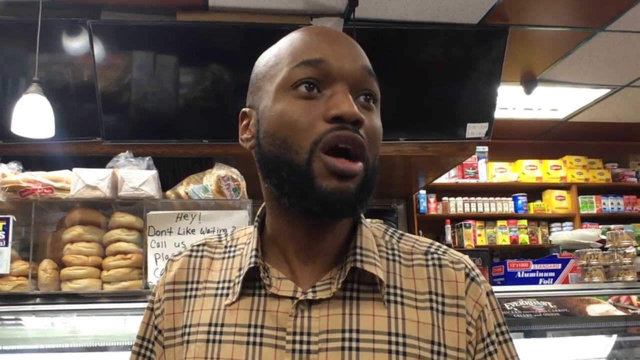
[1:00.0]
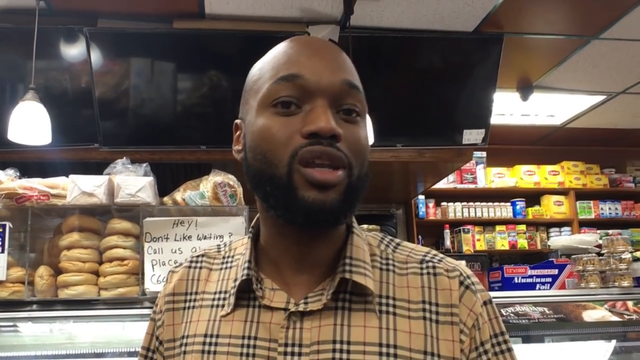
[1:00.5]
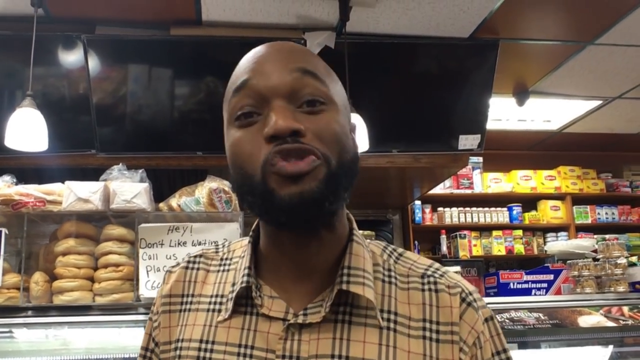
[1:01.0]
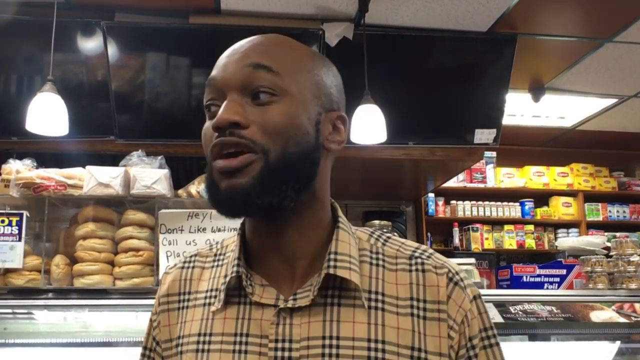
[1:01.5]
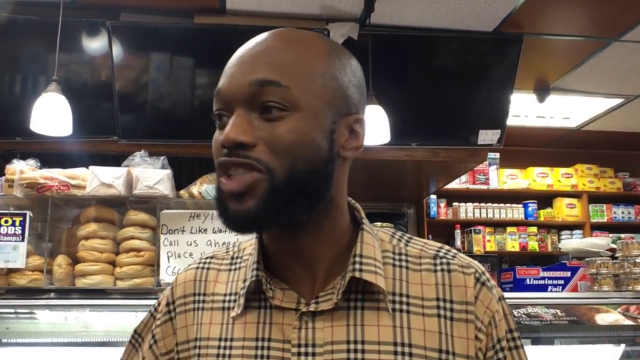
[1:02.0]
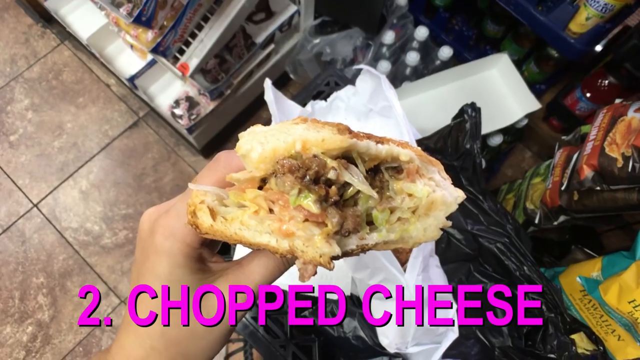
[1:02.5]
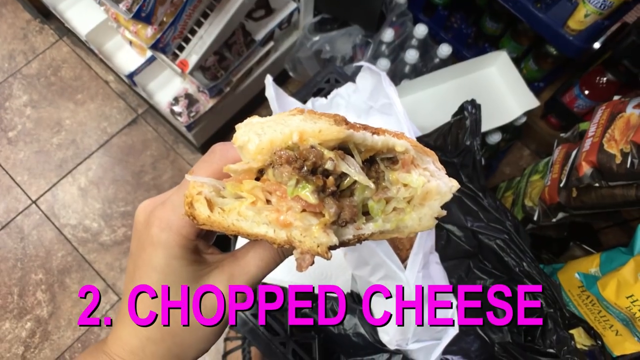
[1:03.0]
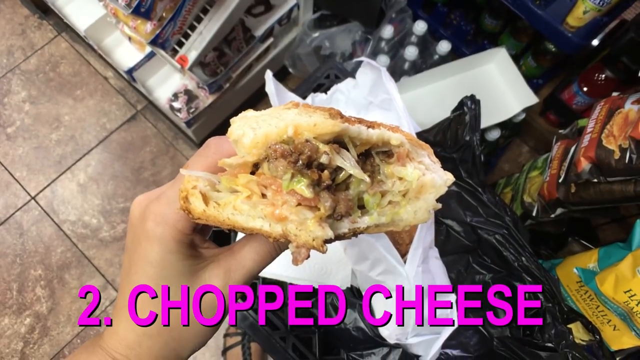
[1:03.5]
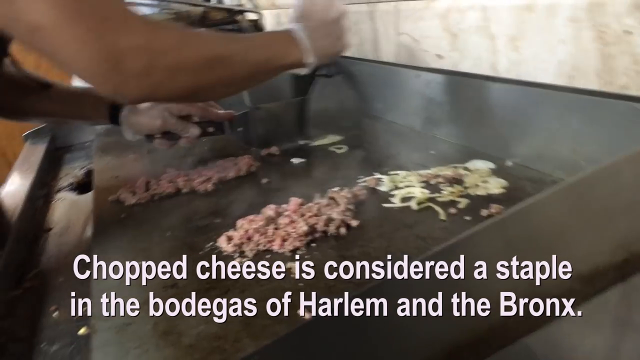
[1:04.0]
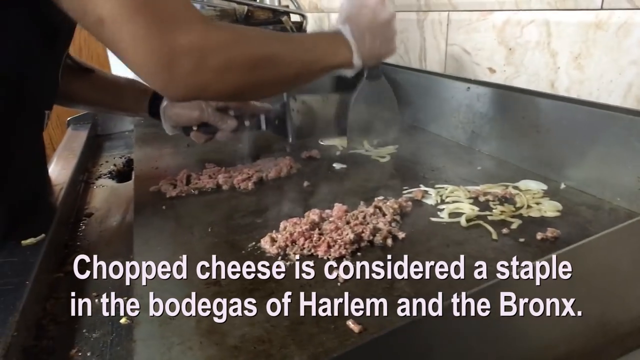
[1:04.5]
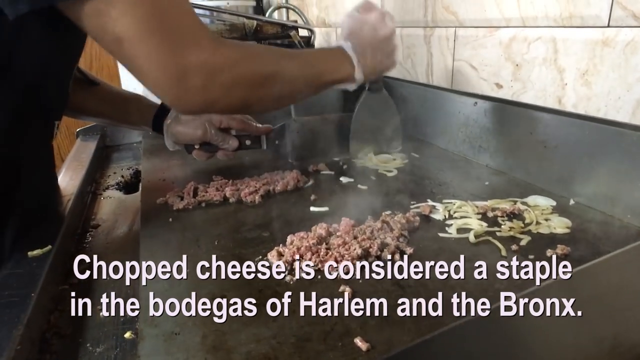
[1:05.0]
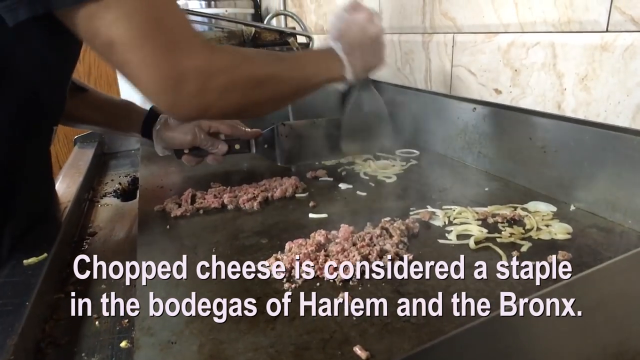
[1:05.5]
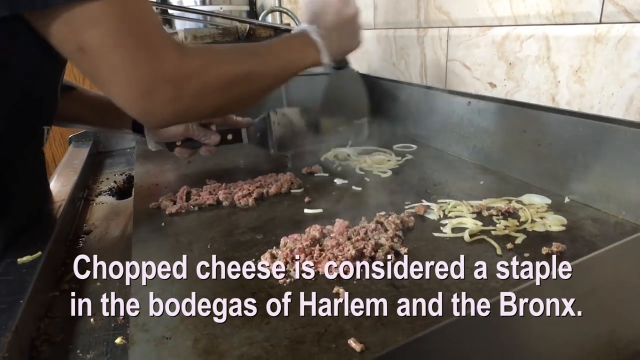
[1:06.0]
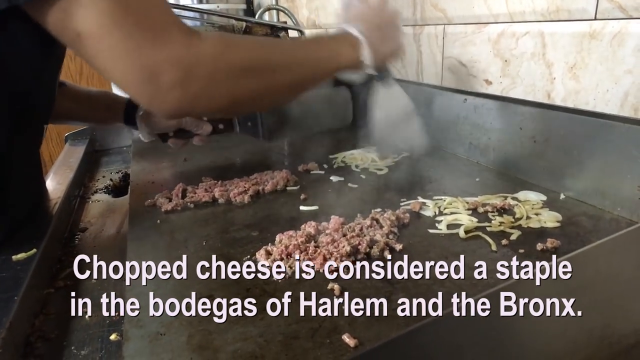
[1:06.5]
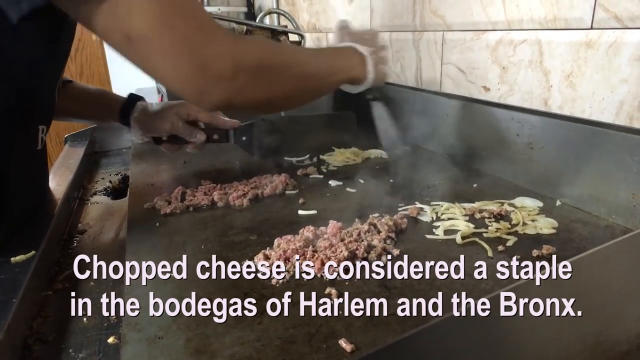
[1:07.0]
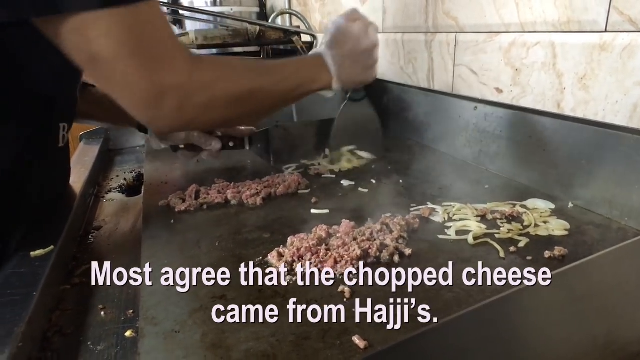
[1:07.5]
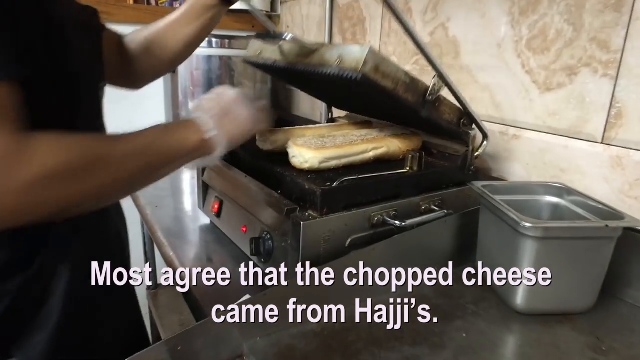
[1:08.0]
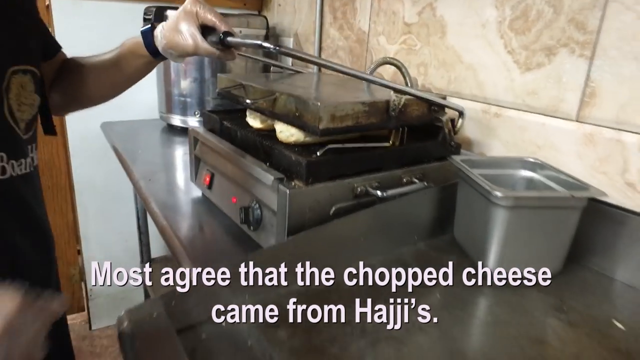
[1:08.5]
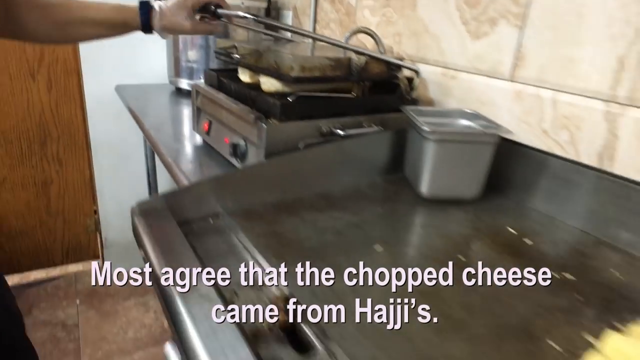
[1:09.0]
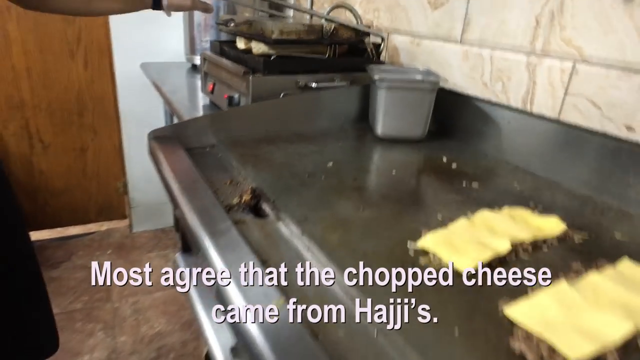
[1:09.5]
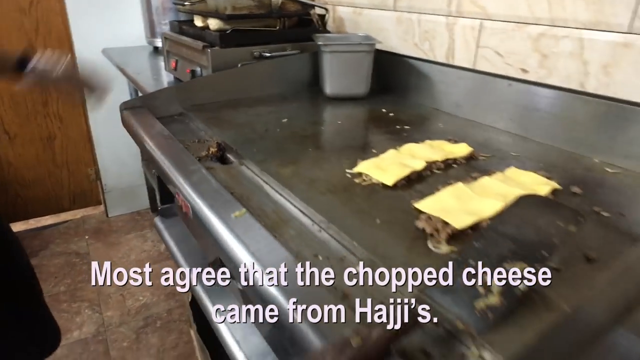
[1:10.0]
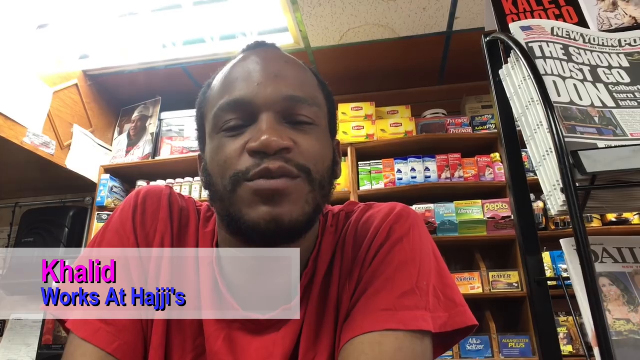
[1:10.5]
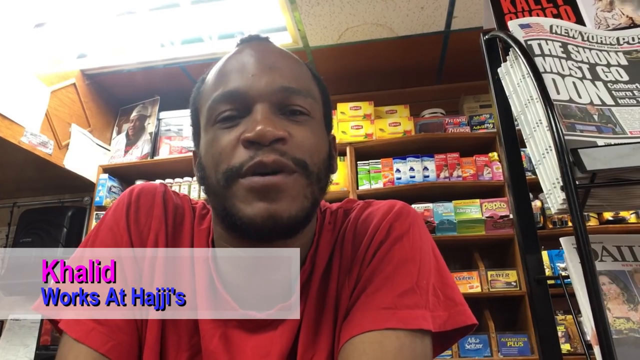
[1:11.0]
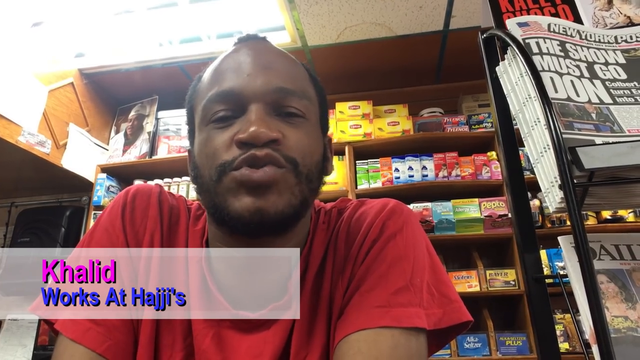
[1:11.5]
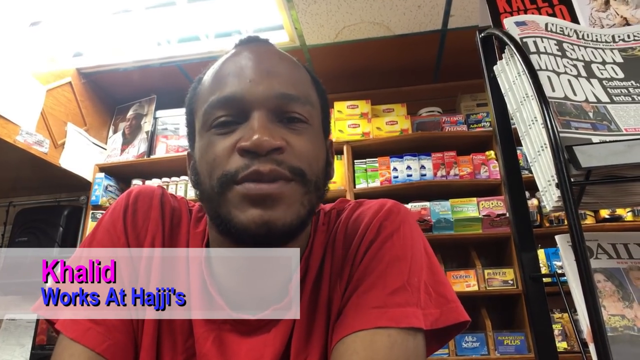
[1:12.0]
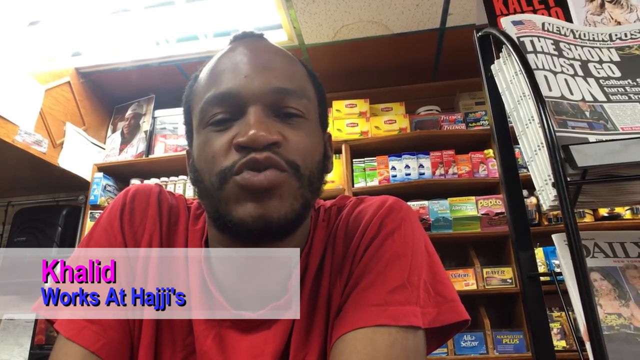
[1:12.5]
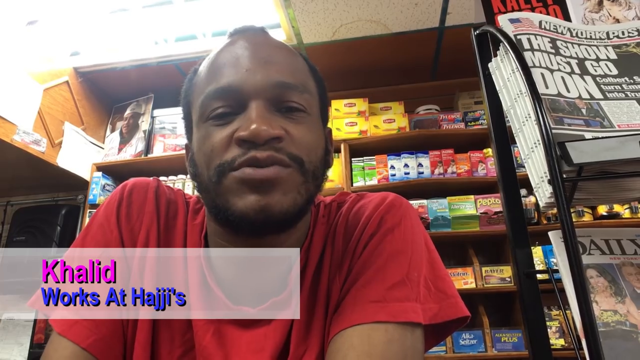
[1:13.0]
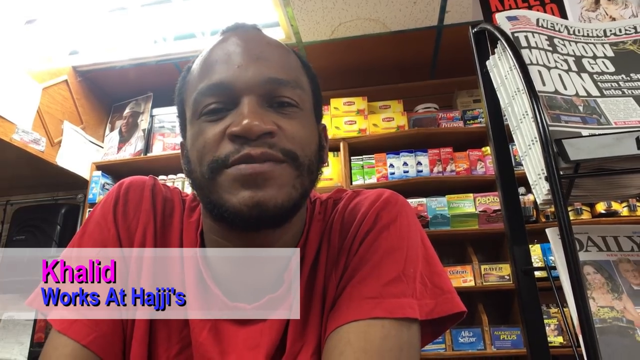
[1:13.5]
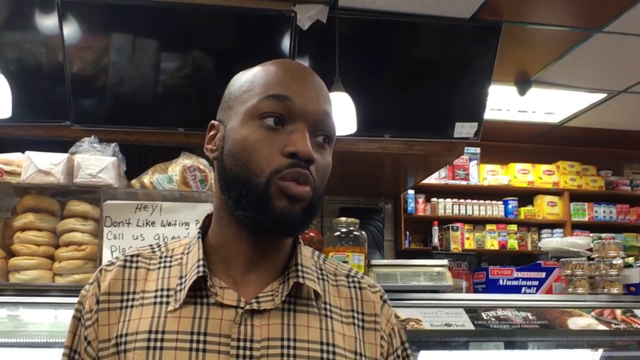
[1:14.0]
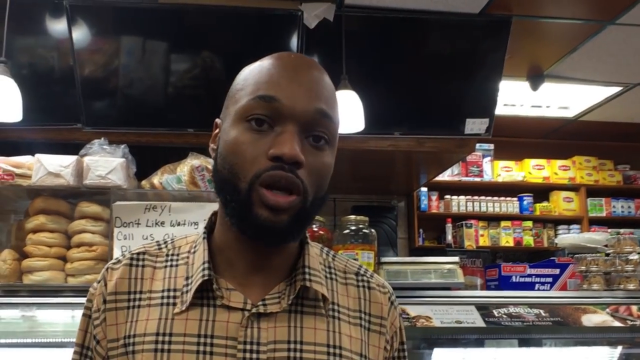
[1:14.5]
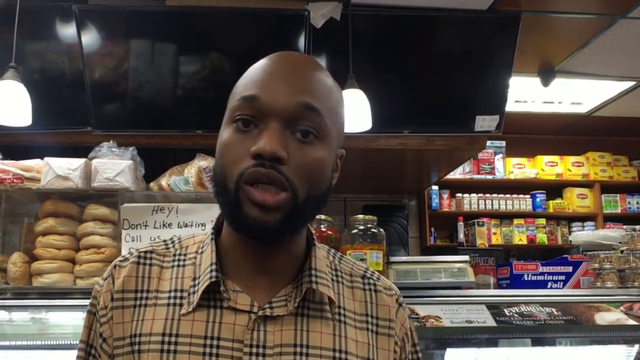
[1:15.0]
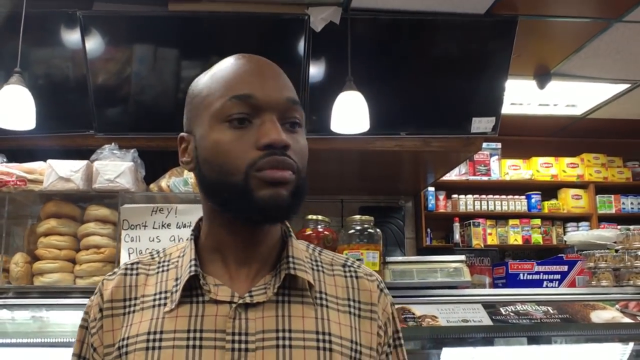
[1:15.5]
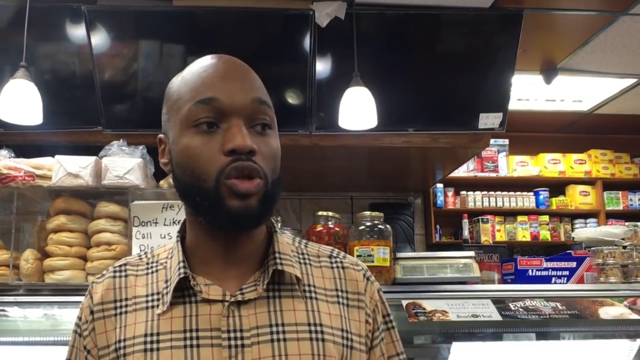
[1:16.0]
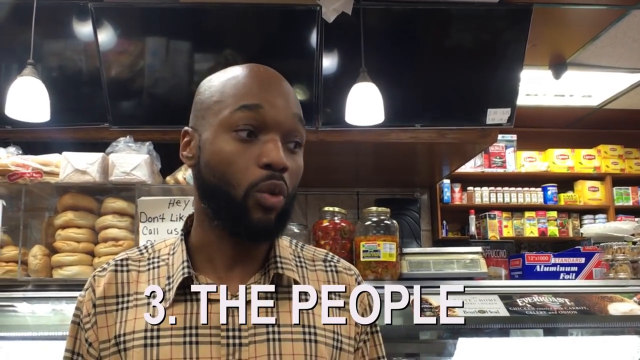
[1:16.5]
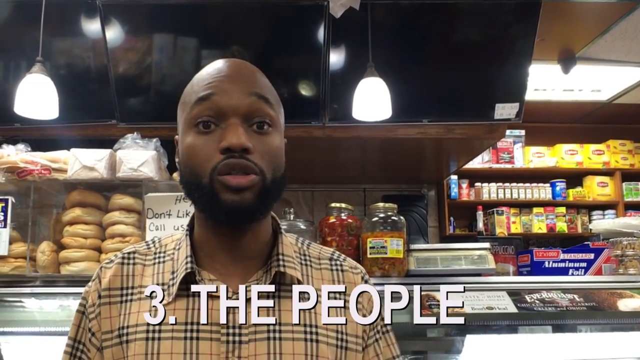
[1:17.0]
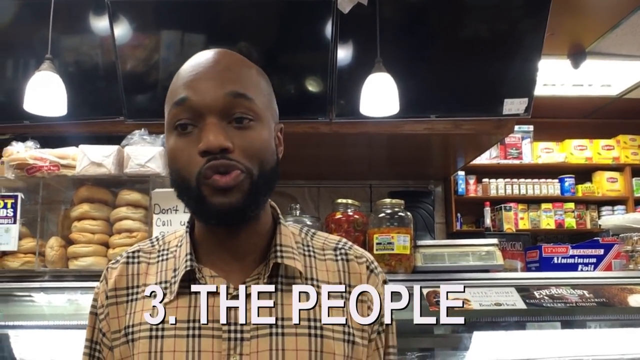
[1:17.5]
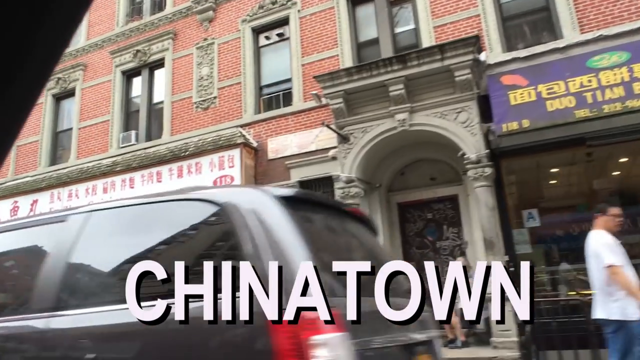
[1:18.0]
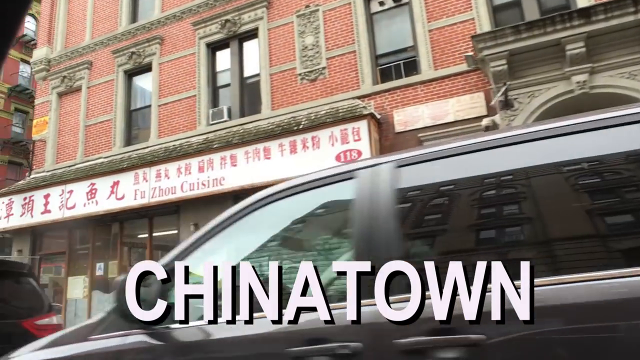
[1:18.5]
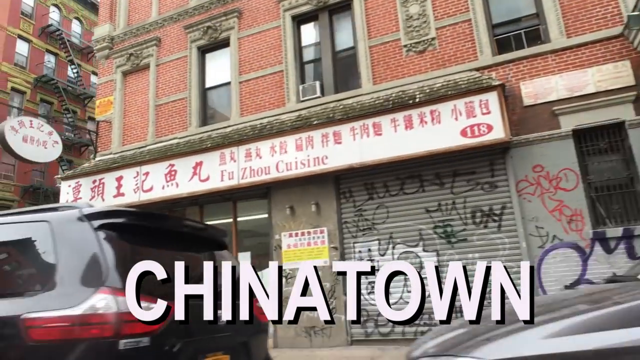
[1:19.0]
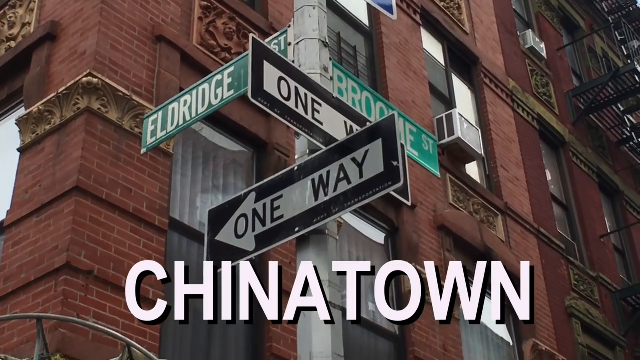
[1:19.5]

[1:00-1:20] A man in a brown checked shirt and black lenses is talking. Onions are shown, along with a sign that apparently reads "deli" and "hot". A caption begins "chopped cheese is considered a staple in the bodegas of Harlem". A man cuts onions and mixes them, and there is cheese on the machine. A man wearing a red t-shirt is shown, with items like medicine behind him and a New York newspaper. The scene shifts back to the man in the checked shirt talking. "Chinatown" then appears in capital letters over a building with pinkish walls, and the camera moves with a person. Street boards read "one way", in green and white and in white and black.